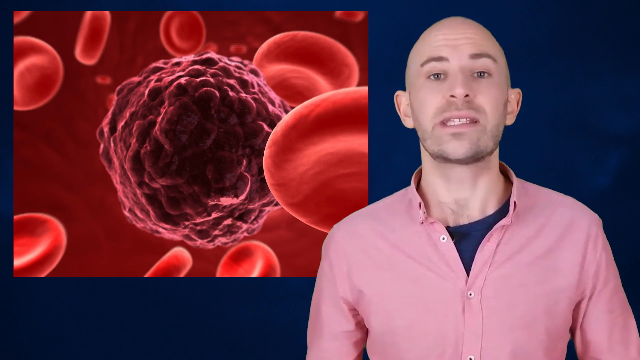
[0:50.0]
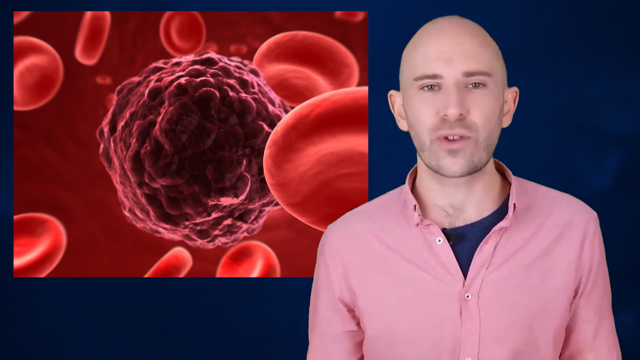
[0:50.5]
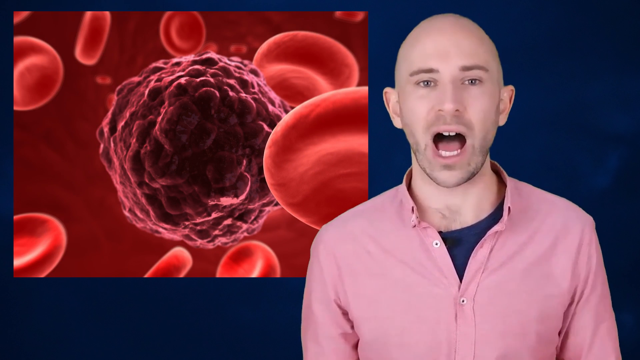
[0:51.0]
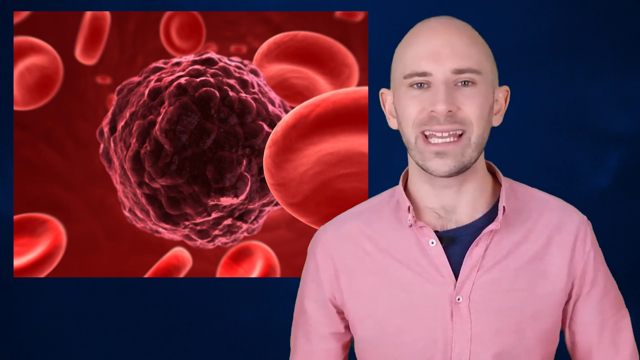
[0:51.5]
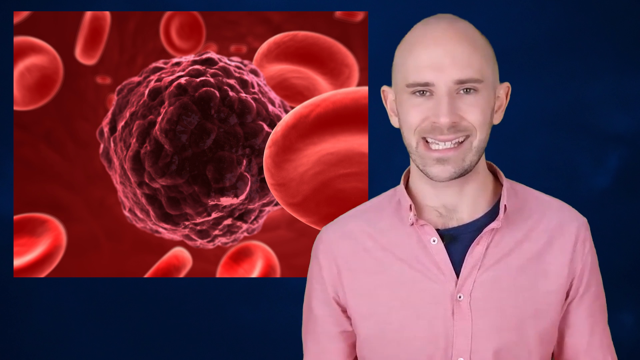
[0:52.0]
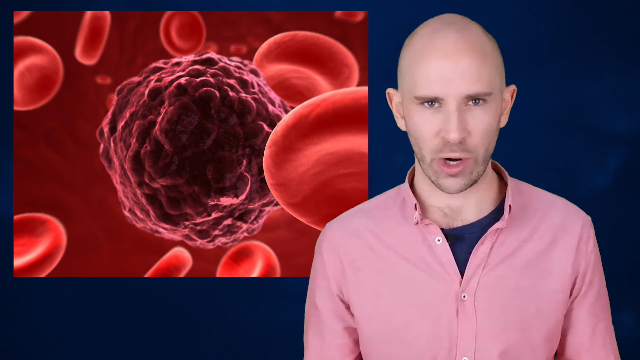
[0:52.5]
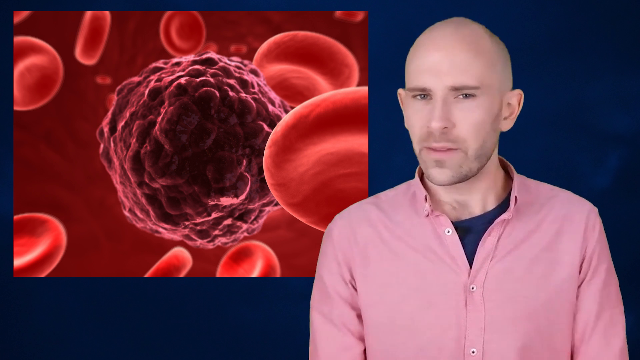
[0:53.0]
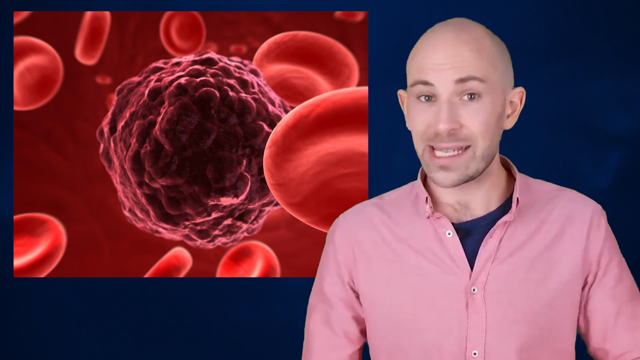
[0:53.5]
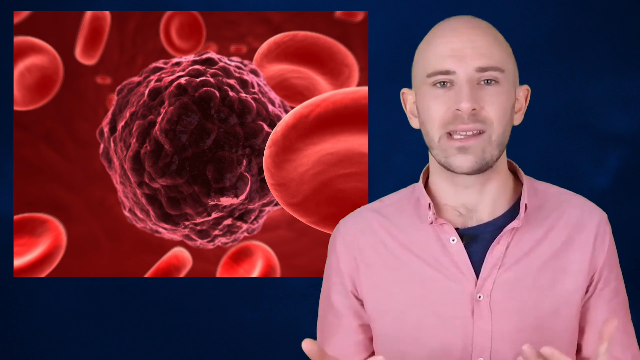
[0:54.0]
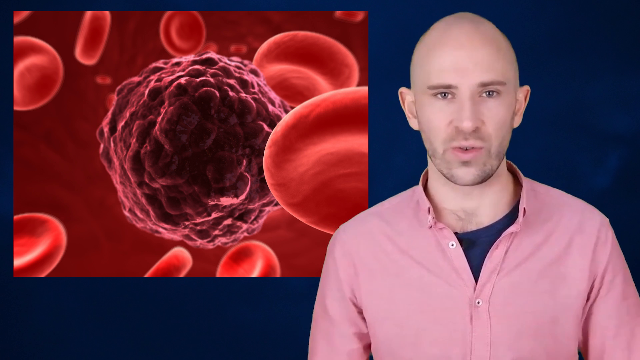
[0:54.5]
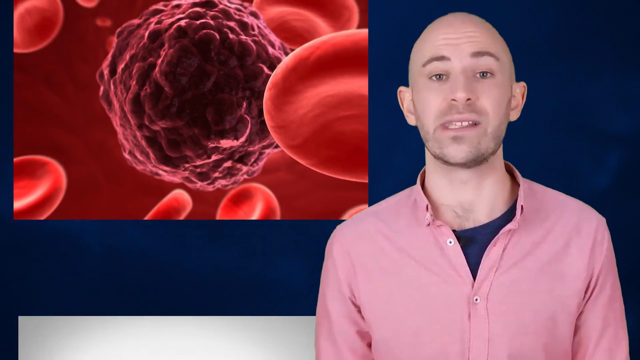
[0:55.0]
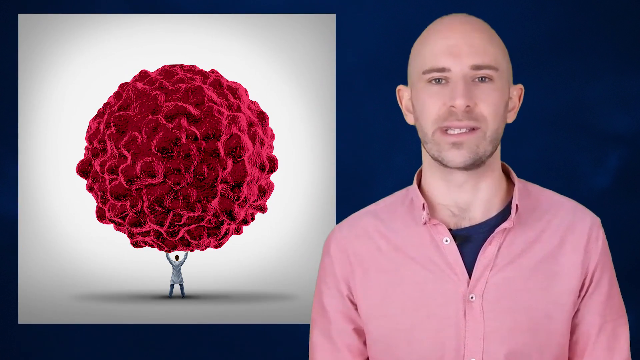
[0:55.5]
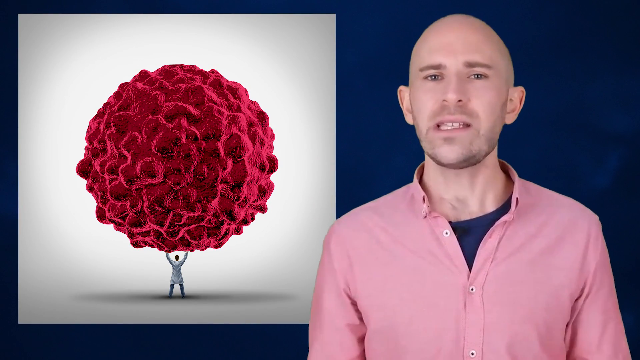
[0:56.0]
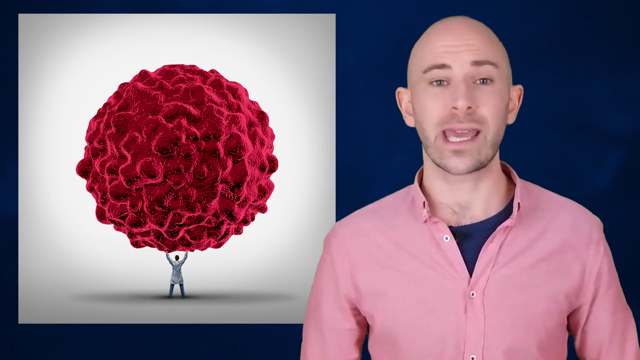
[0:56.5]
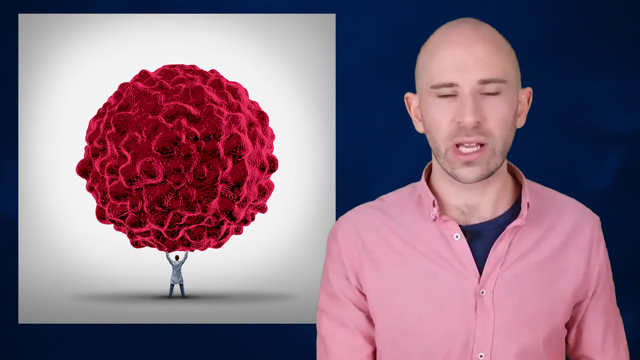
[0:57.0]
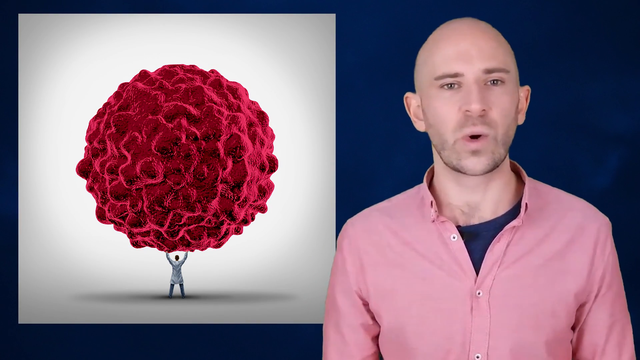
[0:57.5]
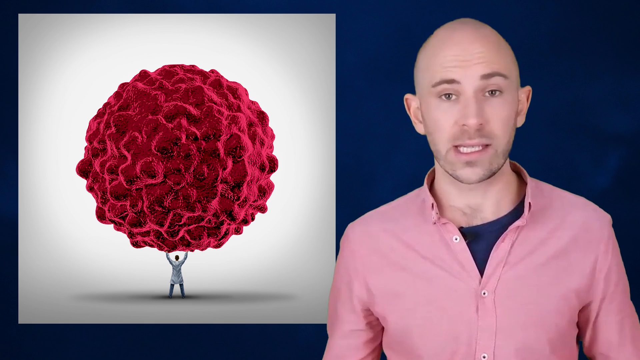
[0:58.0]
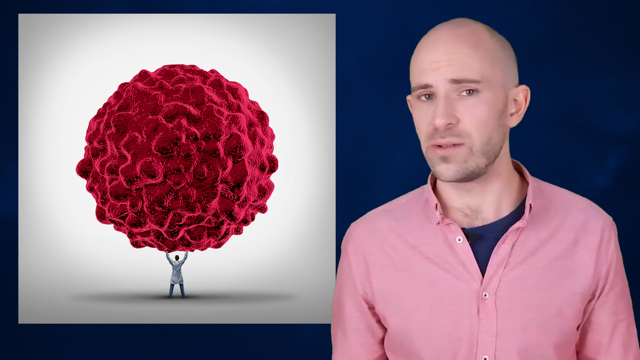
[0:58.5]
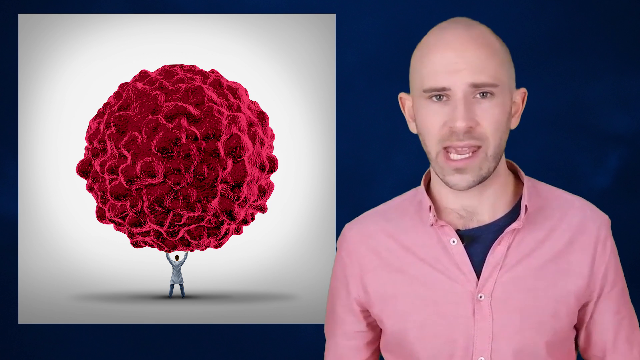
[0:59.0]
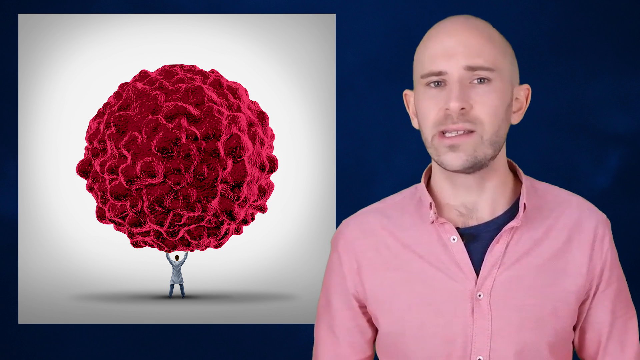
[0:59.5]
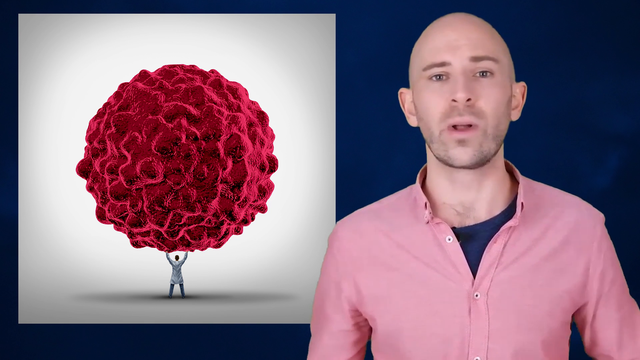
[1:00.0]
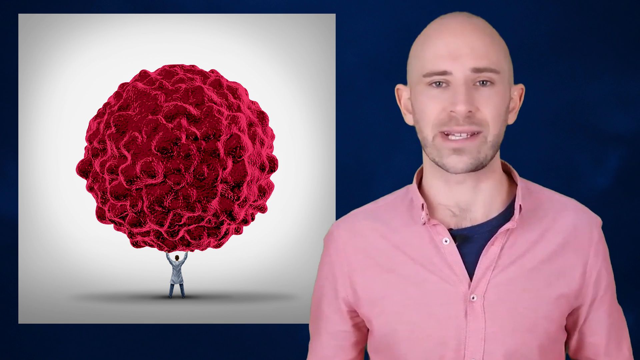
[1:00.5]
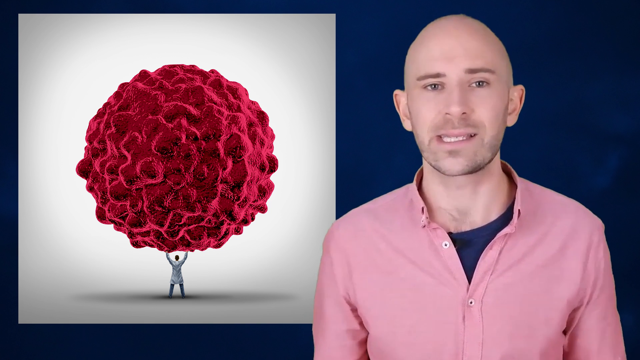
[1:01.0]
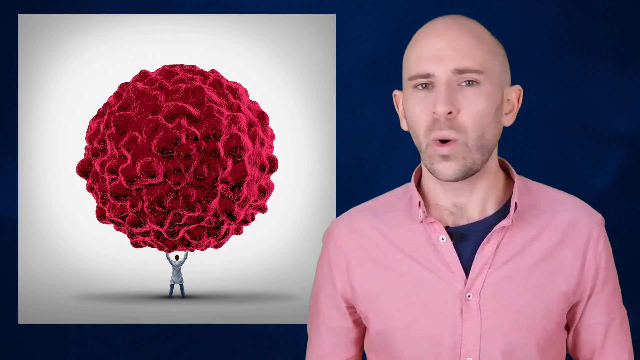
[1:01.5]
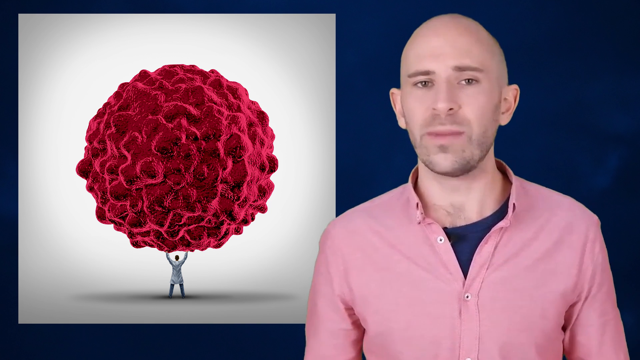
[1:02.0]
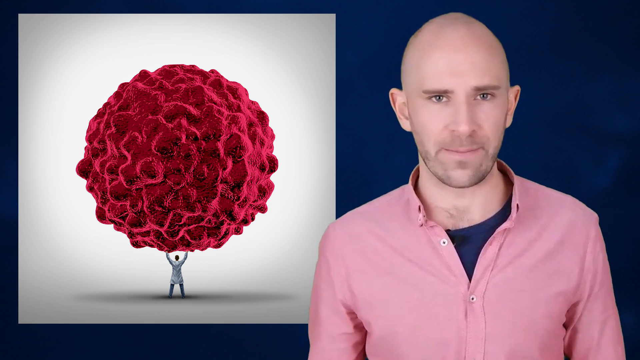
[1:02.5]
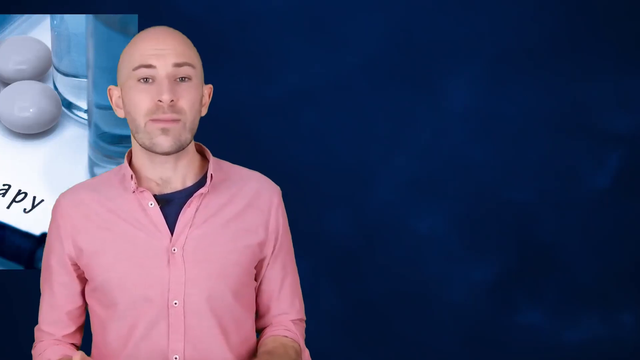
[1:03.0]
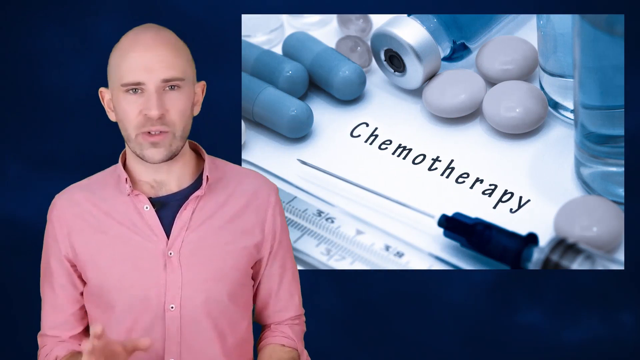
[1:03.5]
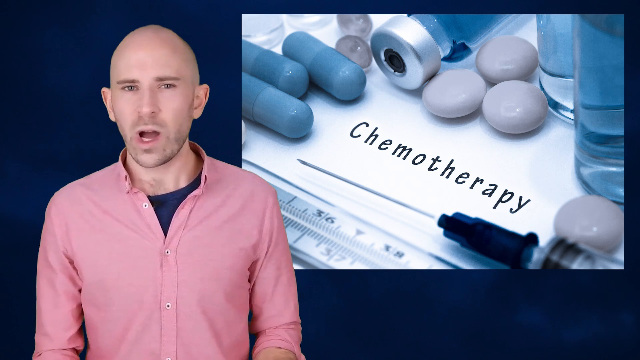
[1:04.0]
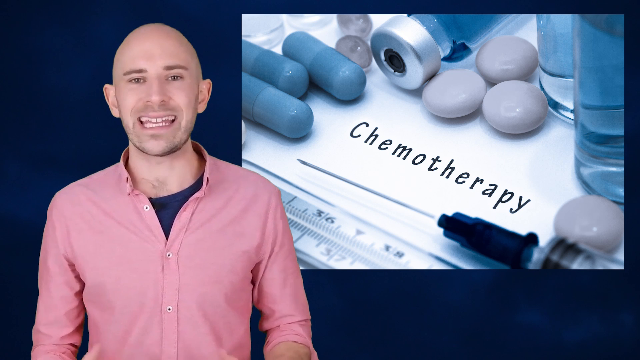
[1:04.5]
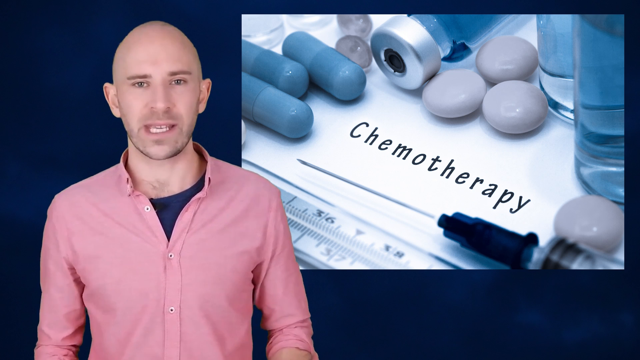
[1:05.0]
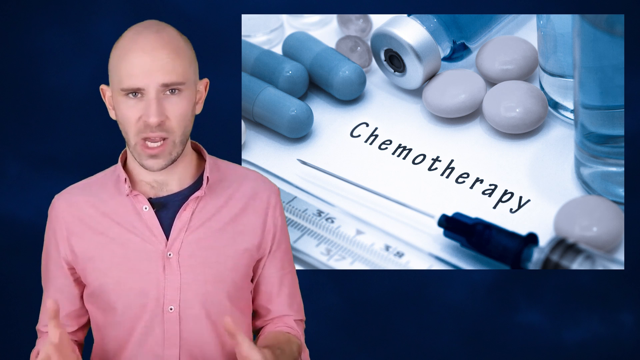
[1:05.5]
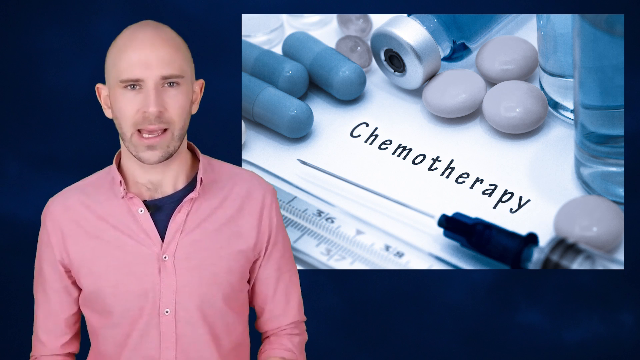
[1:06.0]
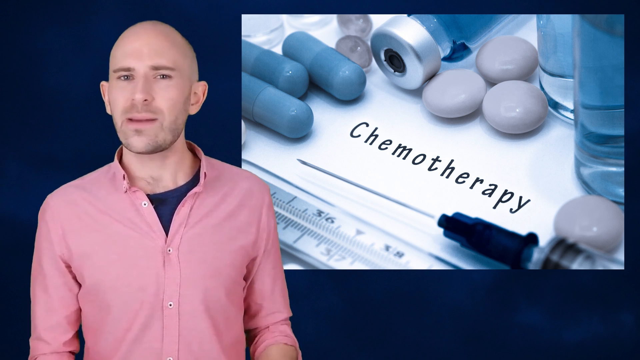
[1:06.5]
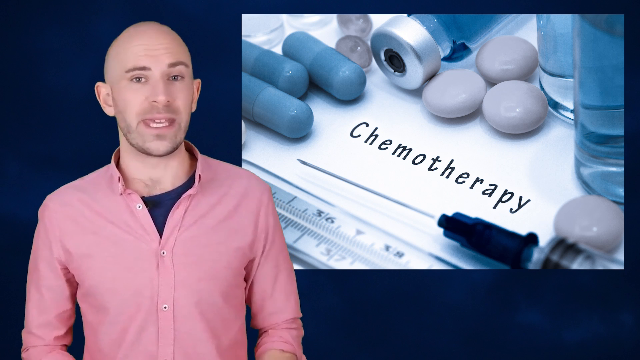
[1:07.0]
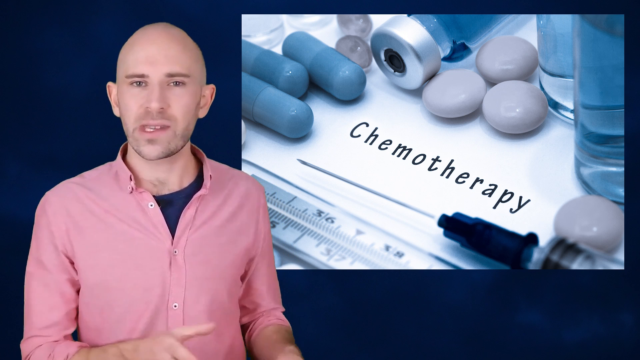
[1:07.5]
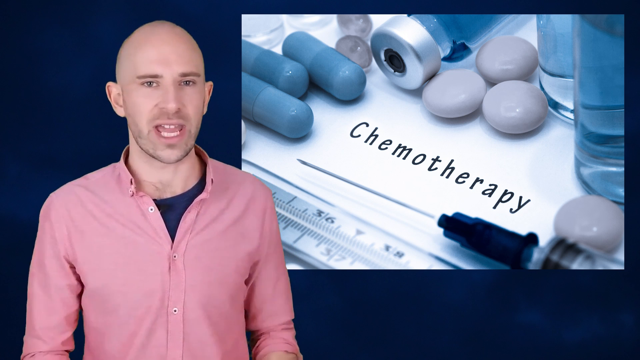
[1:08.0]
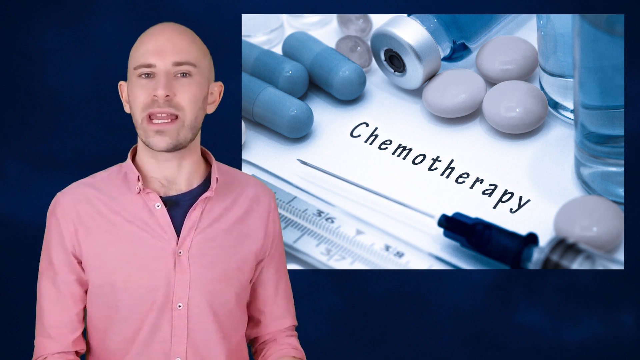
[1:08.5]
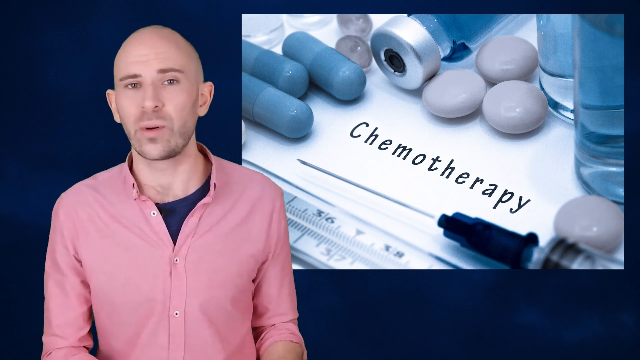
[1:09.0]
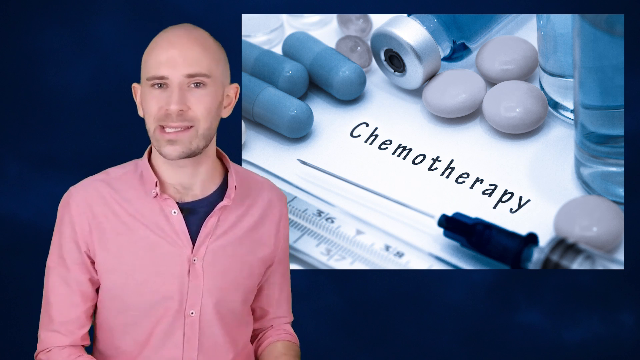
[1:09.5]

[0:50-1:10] The bald-headed man in a pink shirt with a black t-shirt underneath stands in front of a blue background and continues to make a point. To his left is an image of red blood cells, red in color, with a large chunk among them that looks like a cancerous cyst. The video transitions to an image on a white background of the big chunk, cherry or wine in color, being carried by a man. Another image then appears showing pills alongside a medicine bottle and a syringe with a needle, with a ruler below the syringe and needle and the word "chemotherapy" written in blue, all on a white background. The bald-headed man continues to gesticulate as he makes a point.